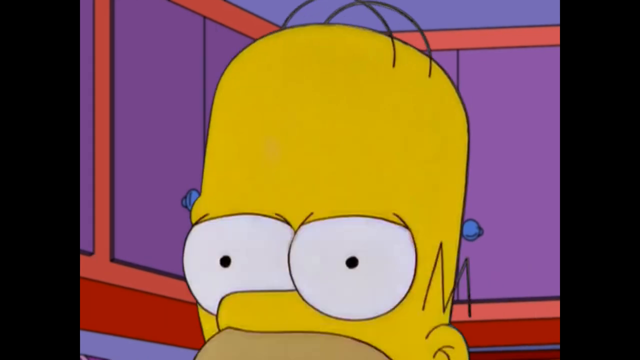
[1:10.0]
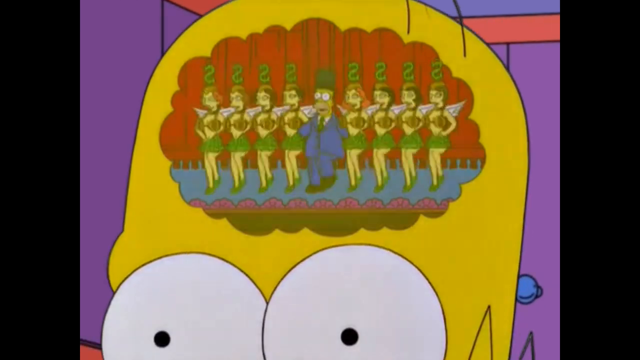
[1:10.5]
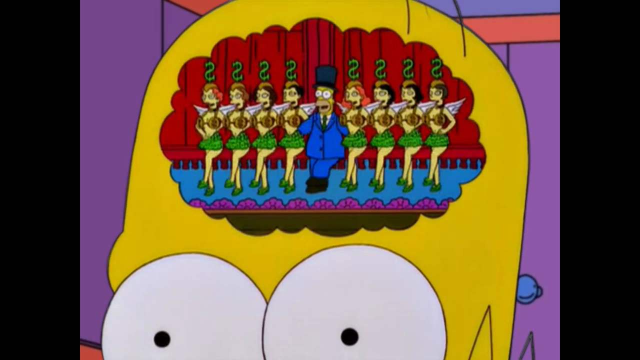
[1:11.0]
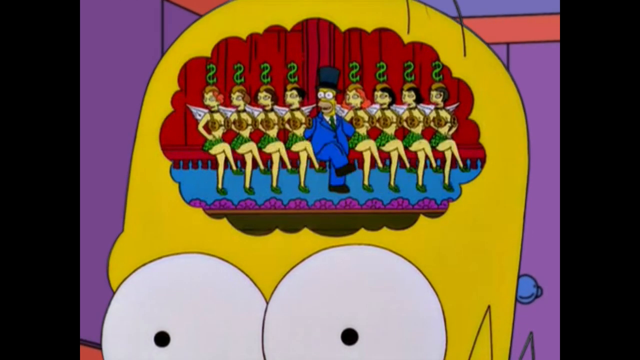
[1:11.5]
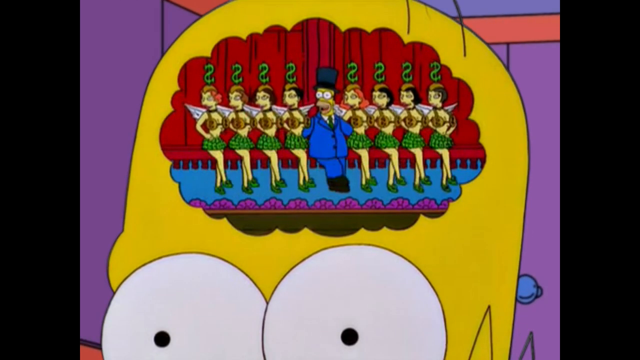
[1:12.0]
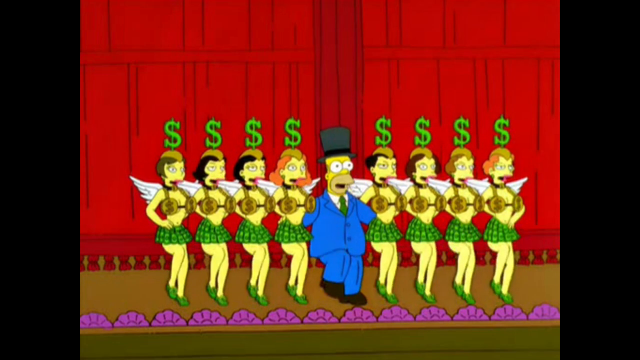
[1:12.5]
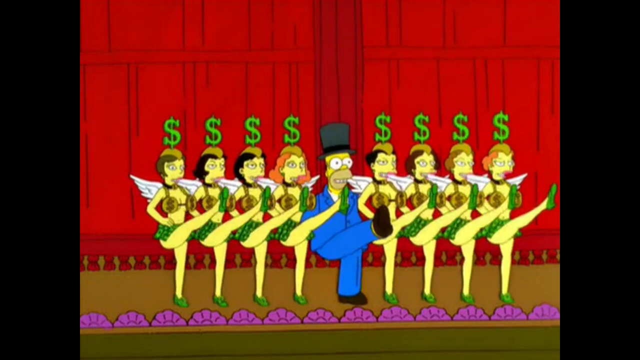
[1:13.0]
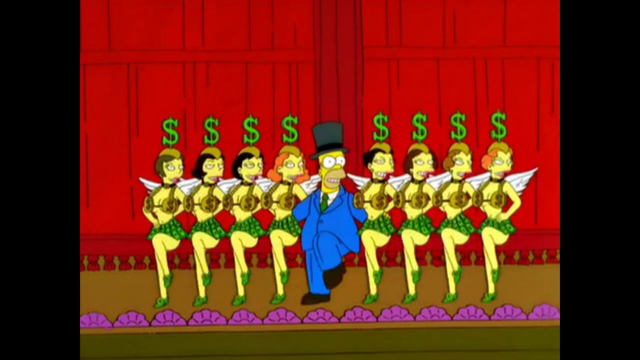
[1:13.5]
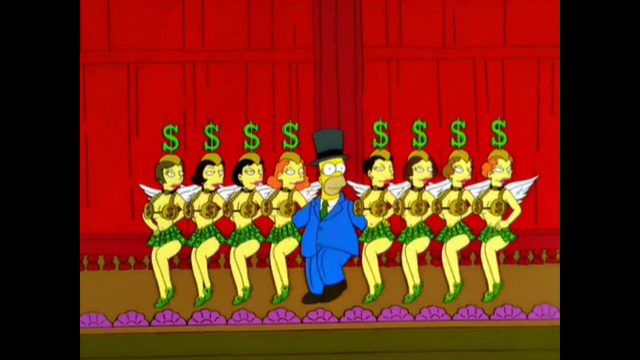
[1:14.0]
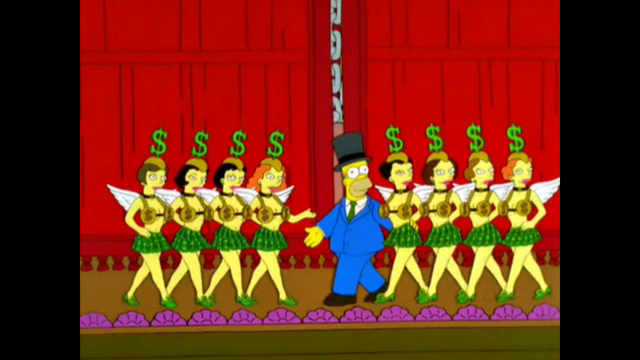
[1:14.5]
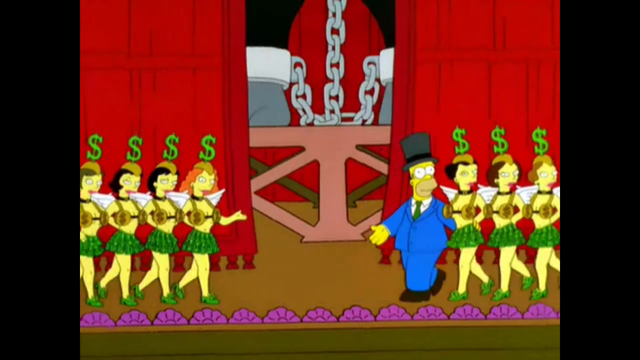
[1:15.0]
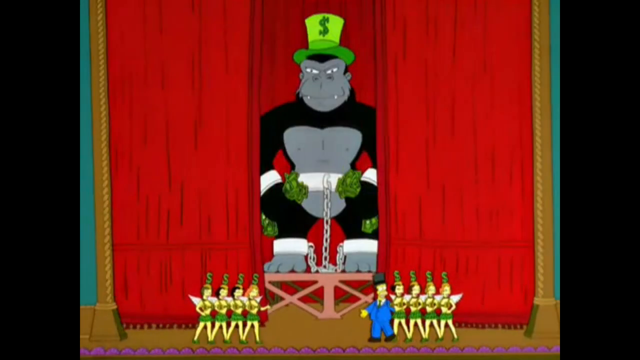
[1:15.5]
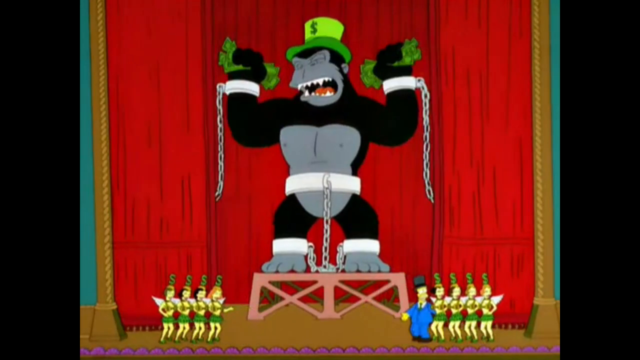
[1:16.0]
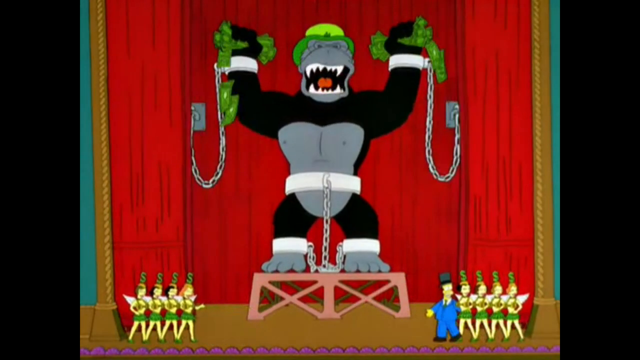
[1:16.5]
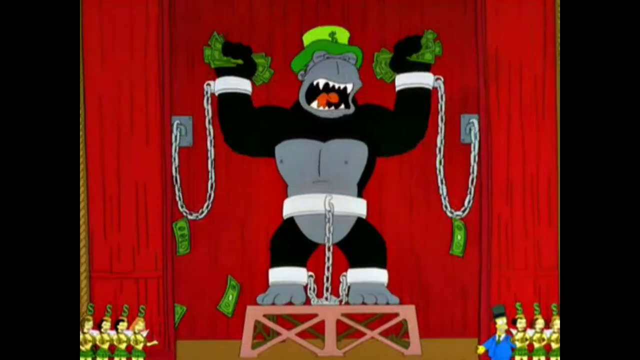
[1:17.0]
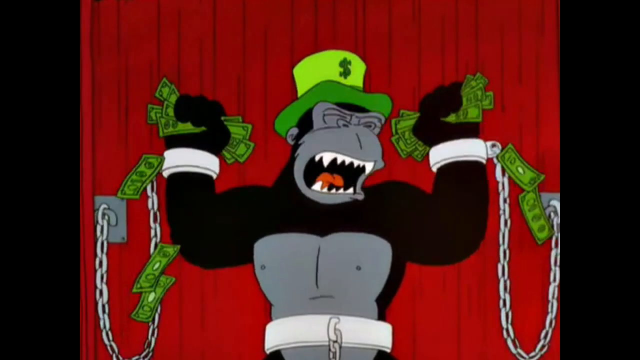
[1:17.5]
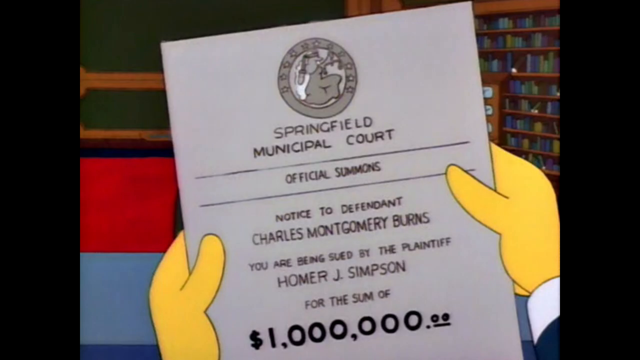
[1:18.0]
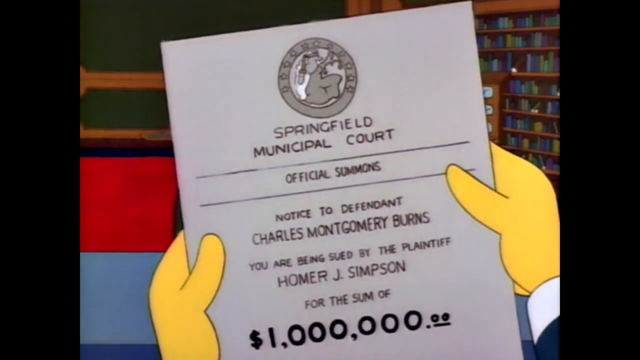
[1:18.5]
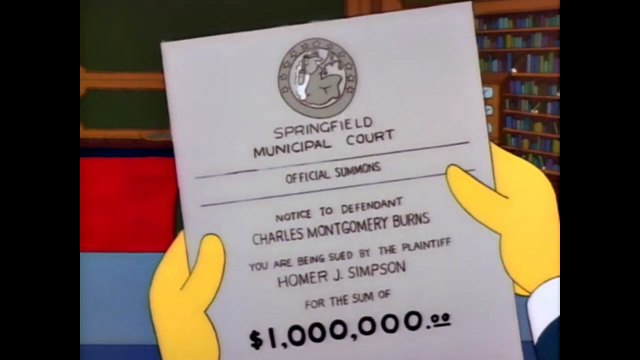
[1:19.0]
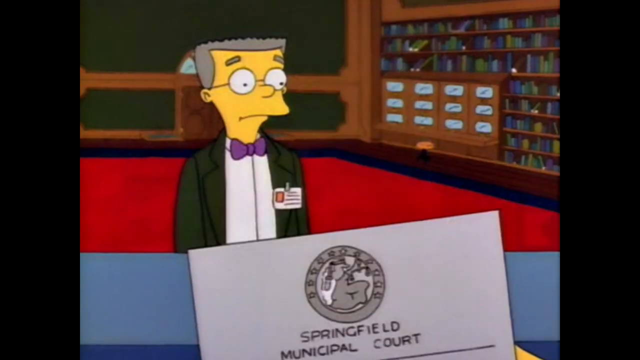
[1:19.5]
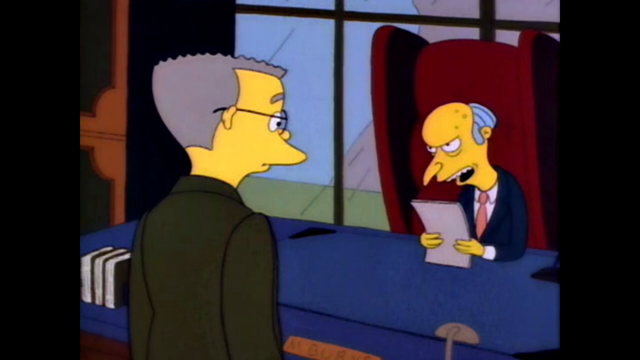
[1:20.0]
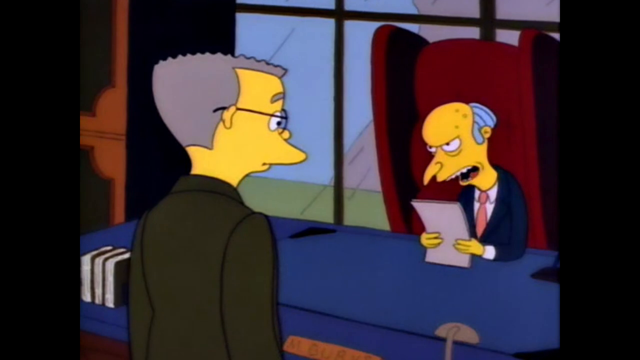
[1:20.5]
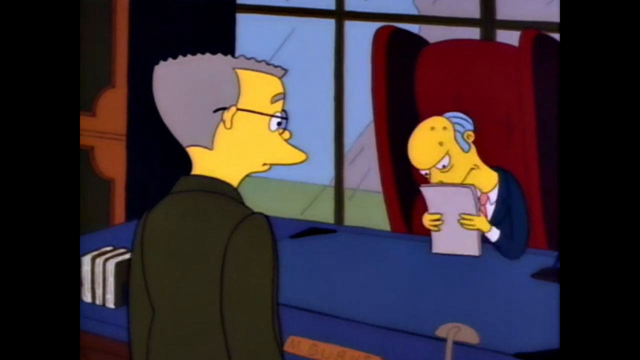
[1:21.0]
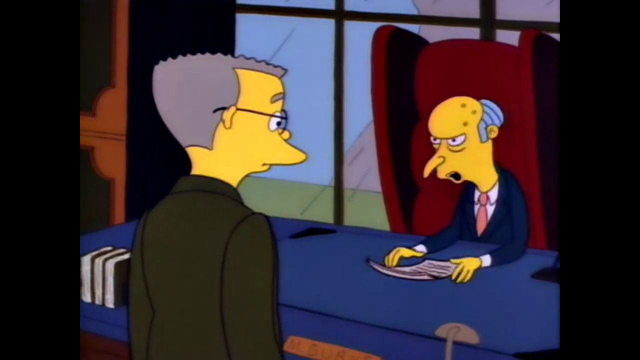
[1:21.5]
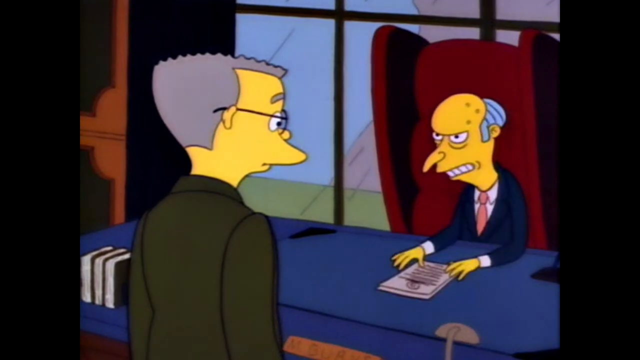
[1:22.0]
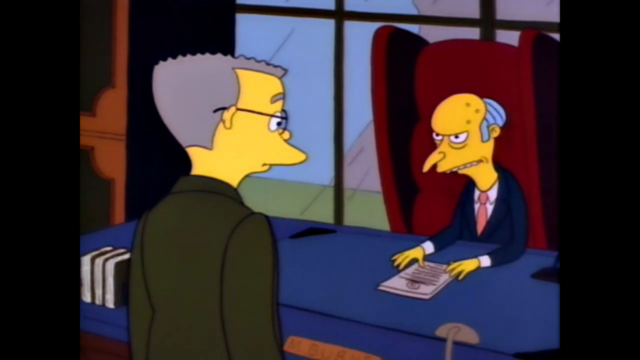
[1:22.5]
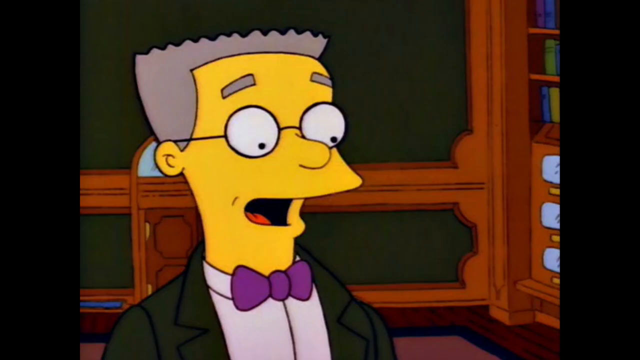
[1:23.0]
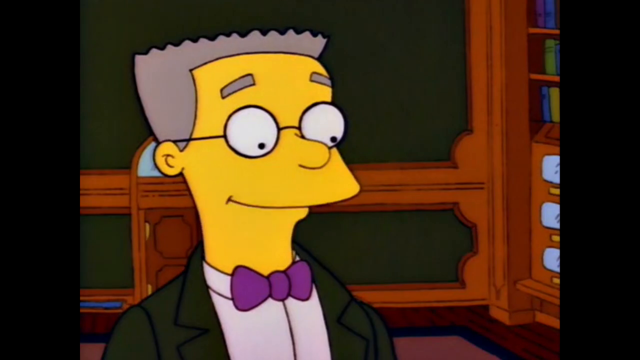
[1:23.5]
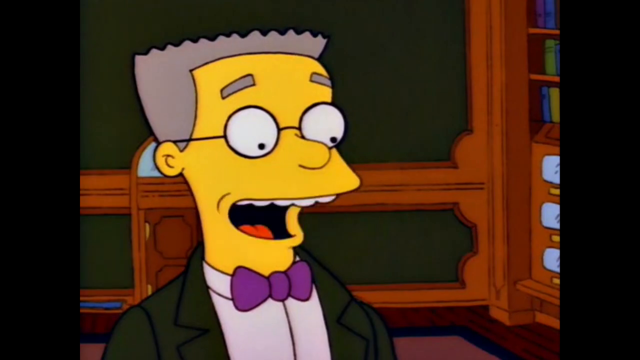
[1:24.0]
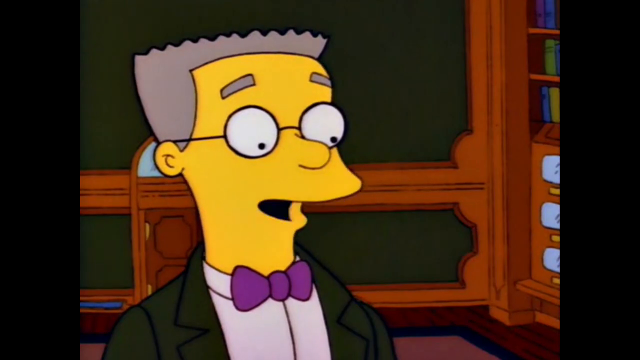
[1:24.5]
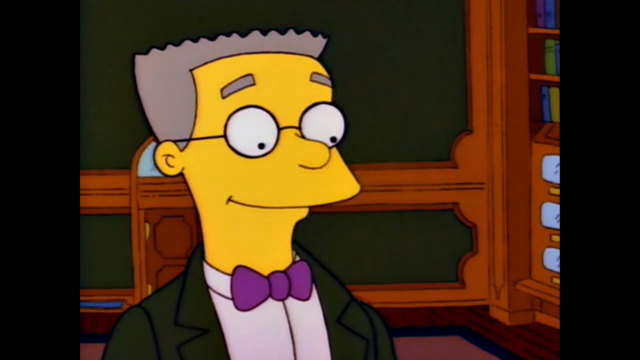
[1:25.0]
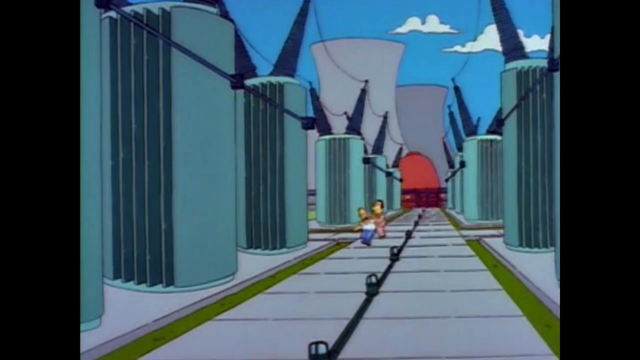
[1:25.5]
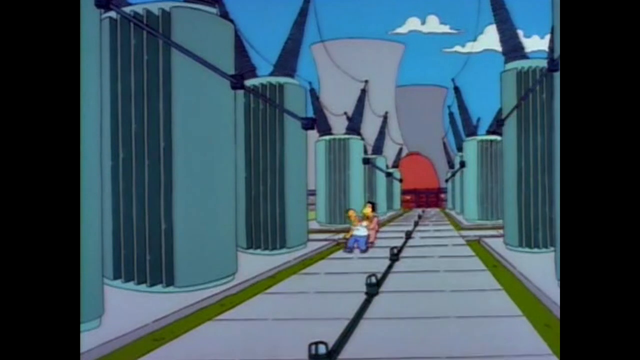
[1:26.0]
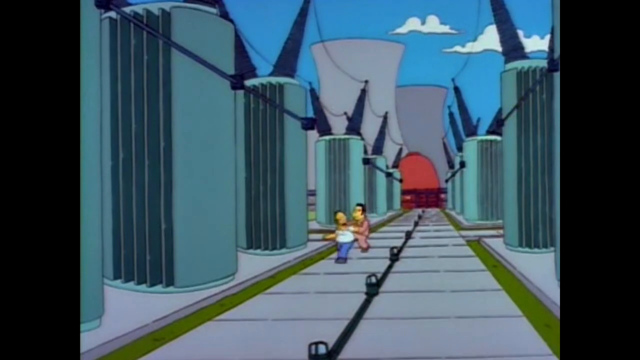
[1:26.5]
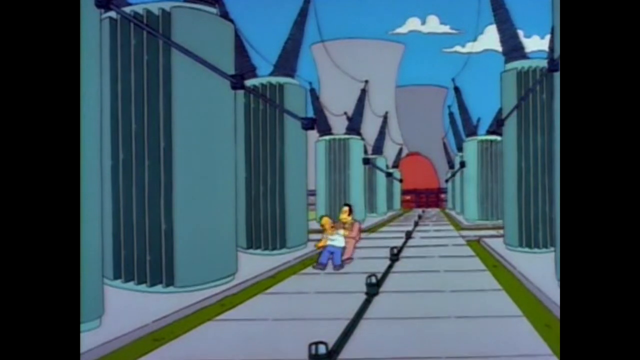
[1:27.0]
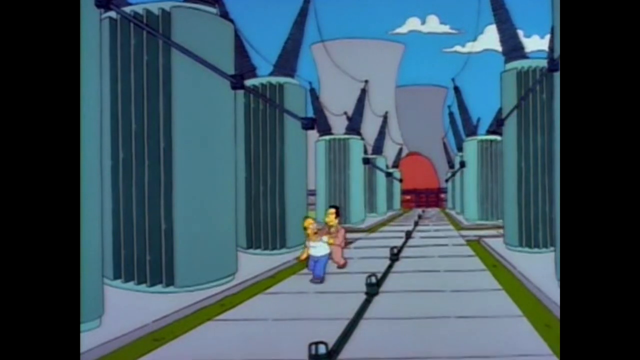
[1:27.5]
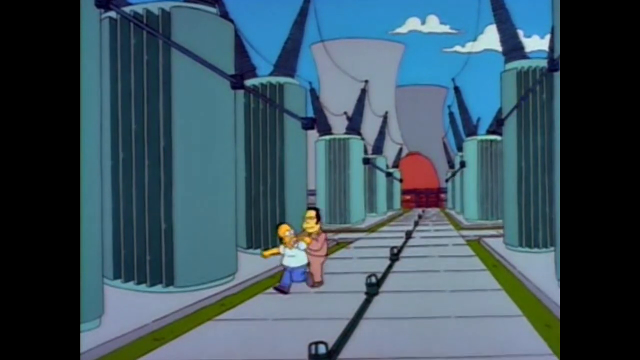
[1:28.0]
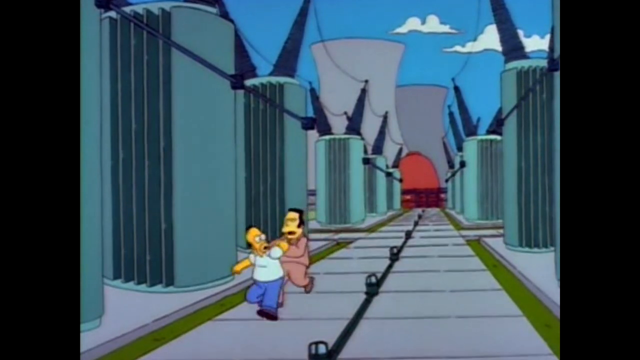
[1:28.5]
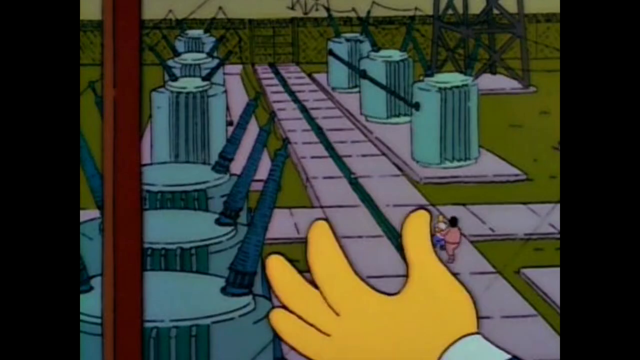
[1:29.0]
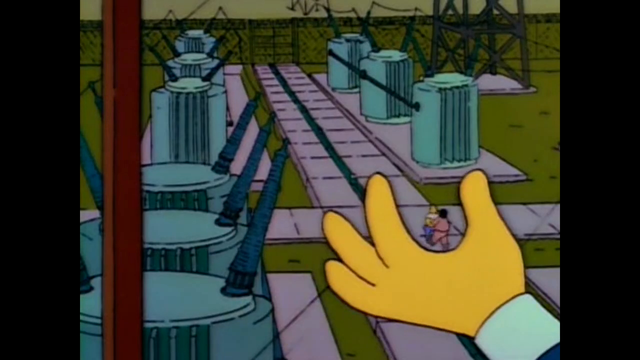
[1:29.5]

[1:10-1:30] The camera zooms in even closer on Homer's forehead, and a little circle opens up with a kind of cloud-hump edge. Inside, Homer is in the center in a blue suit and a top hat, in front of a red curtain on a blue floor. To his left and right are four girls wearing coconut bras, short green skirts and green high heels, with money signs over their heads. They do leg kicks to the left and to the right, and the camera zooms on them as they all sing. They turn their hips to the left and kick, turn their hips to the right and kick, then back away: Homer goes right with four girls while the other four girls go left as the curtain opens. Behind it is a big monkey in a green hat holding cash, with chains hanging from him. He holds the money up above his head, mouth open, teeth and tongue showing. The scene cuts to someone holding a piece of paper, only their hands visible on the left and right. It is a paper for "Springfield Municipal Court official summons", and it says "notice the defendant Charles Montgomery Burns you're being sued by the plaintiff Homer J Simpson for the sum of 1 million dollars". He lowers the paper, revealing Milton sitting there staring. The view is then from behind Milton, with Mr. Burns on the right holding the paper, sitting behind a blue table with a red chair behind him, talking. The scene cuts to a close-up of Milton talking. A shot shows big power boxes on the left and right, with Homer walking in the distance toward the left. A wide shot shows Mr. Burns looking out the window; his hand is visible, making kind of a C, and in the center of it Homer and his lawyer are seen walking.